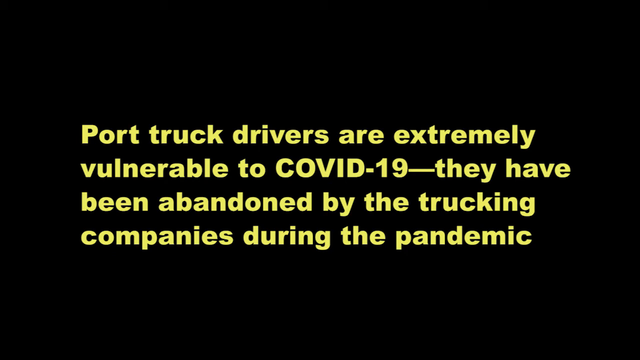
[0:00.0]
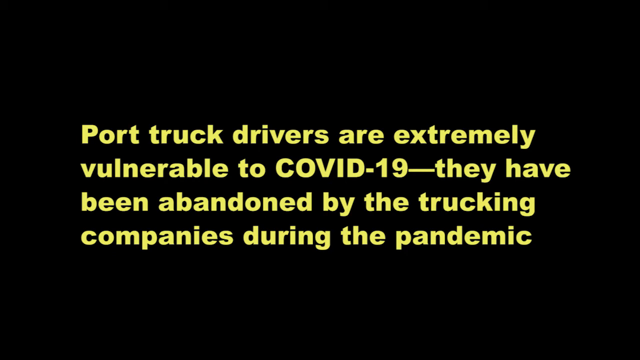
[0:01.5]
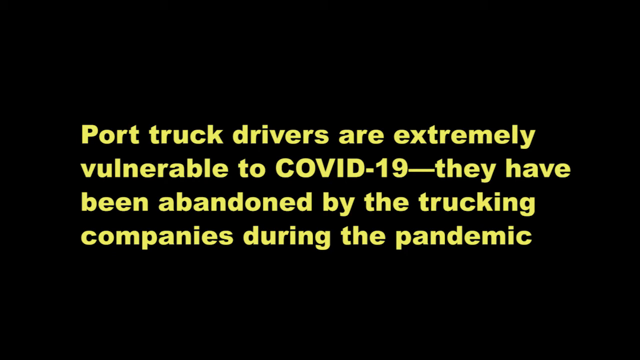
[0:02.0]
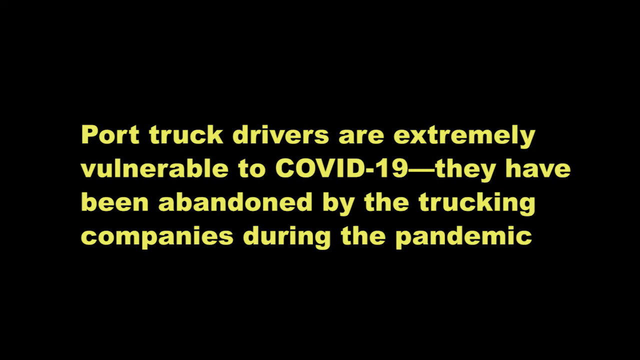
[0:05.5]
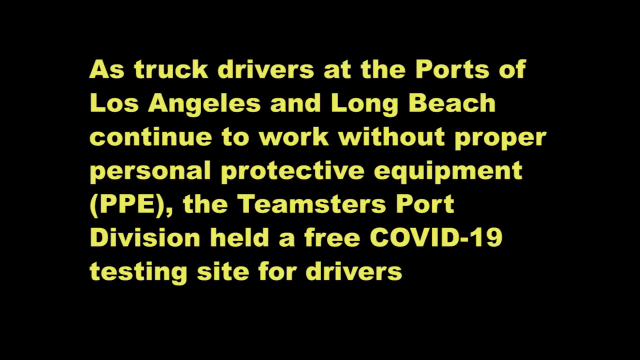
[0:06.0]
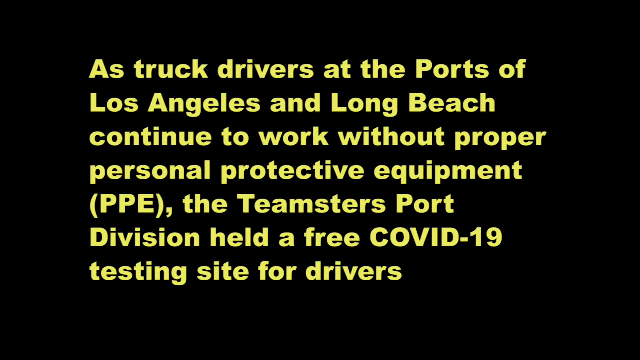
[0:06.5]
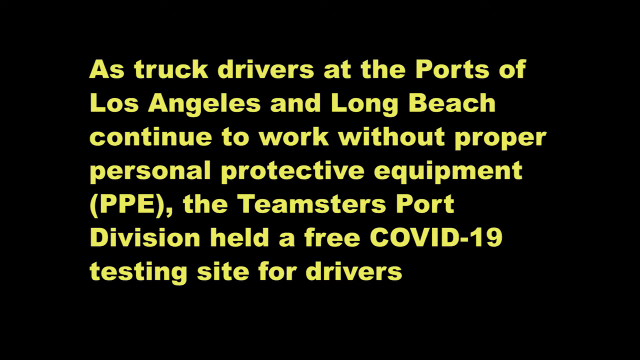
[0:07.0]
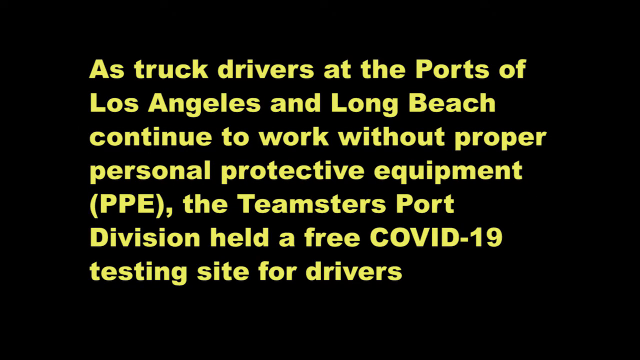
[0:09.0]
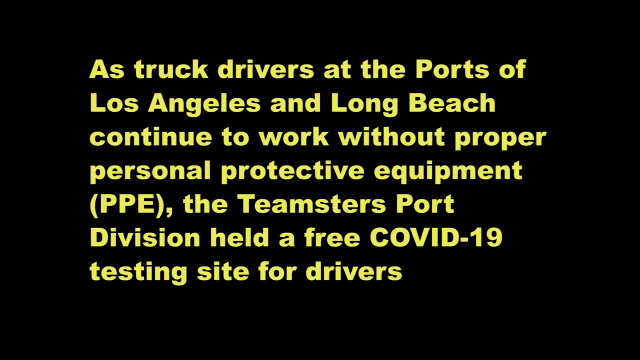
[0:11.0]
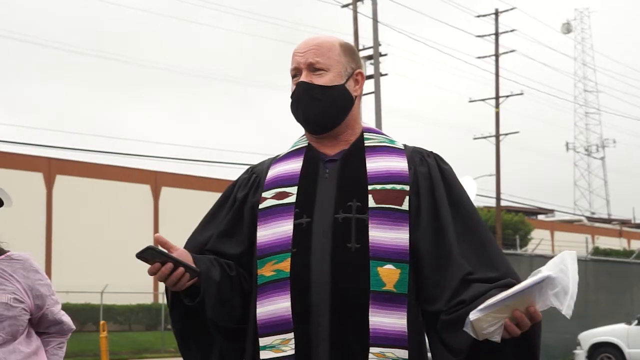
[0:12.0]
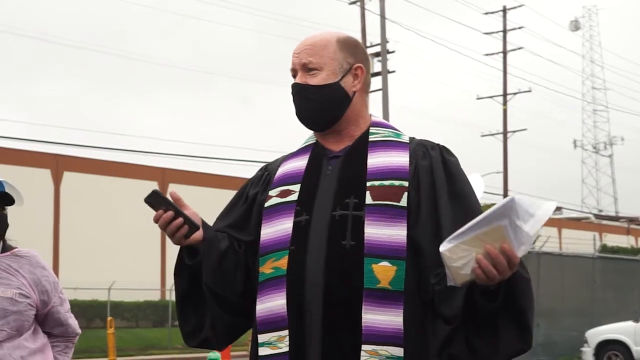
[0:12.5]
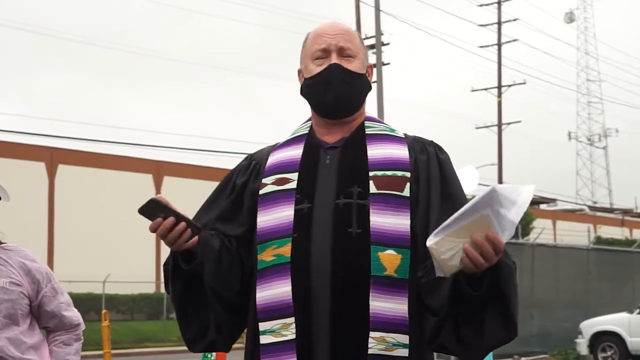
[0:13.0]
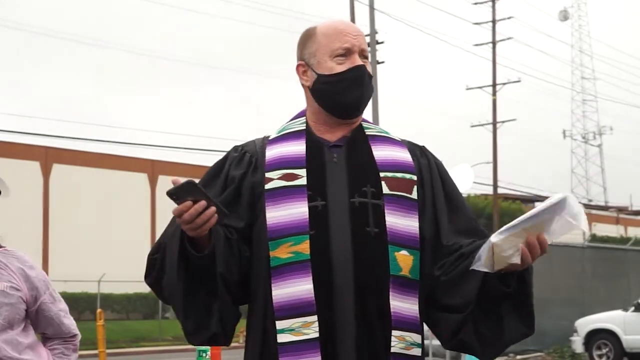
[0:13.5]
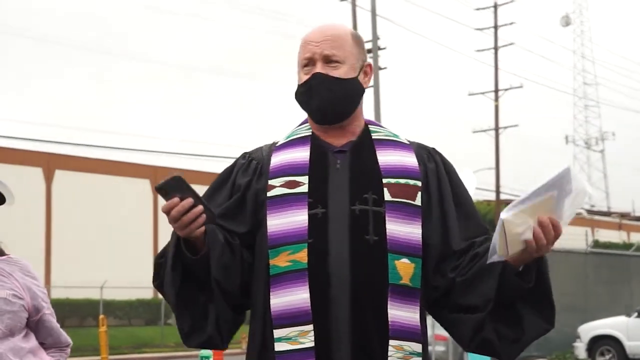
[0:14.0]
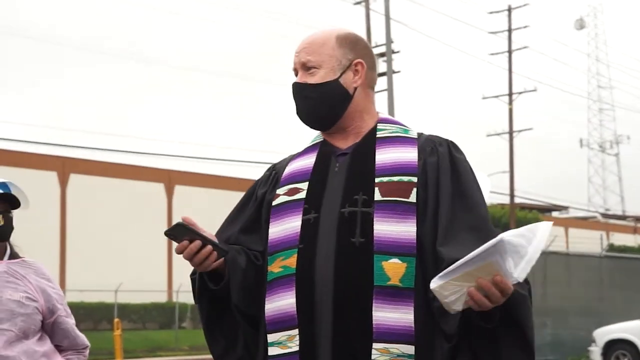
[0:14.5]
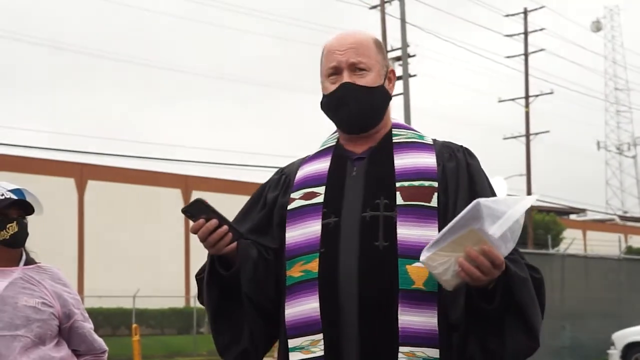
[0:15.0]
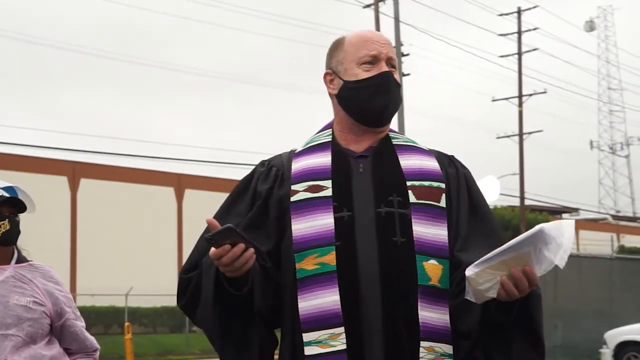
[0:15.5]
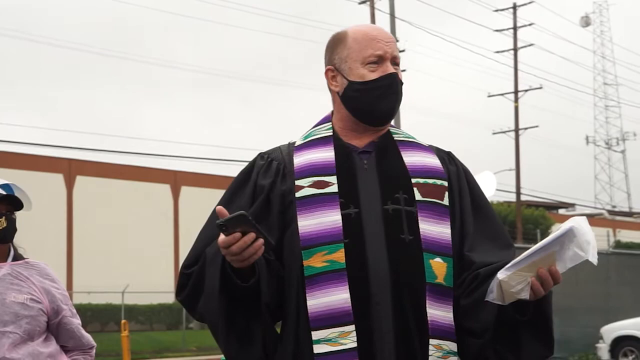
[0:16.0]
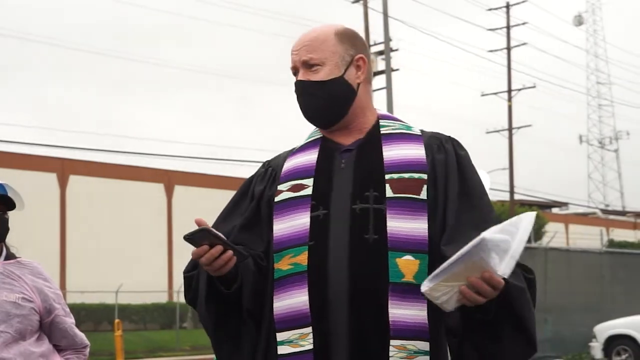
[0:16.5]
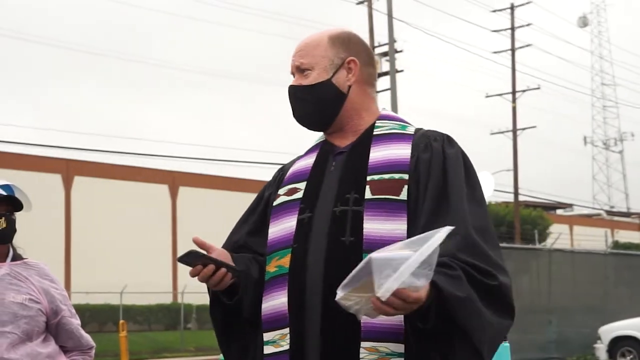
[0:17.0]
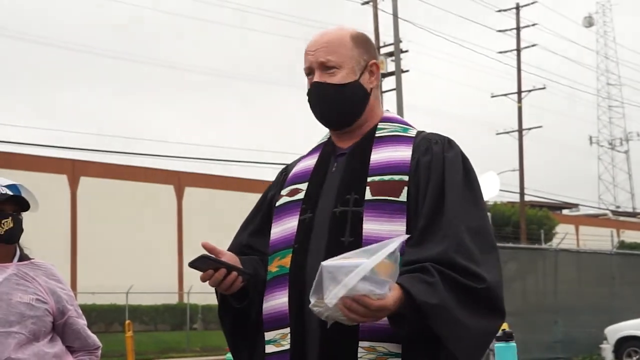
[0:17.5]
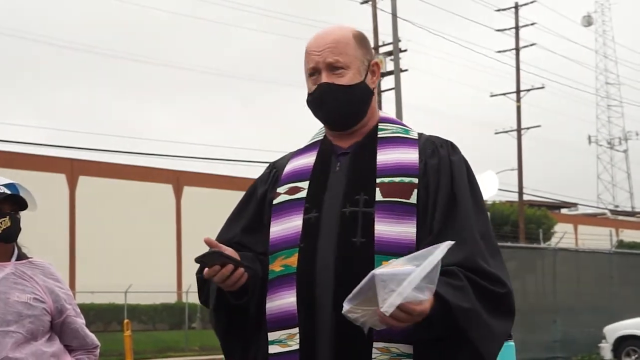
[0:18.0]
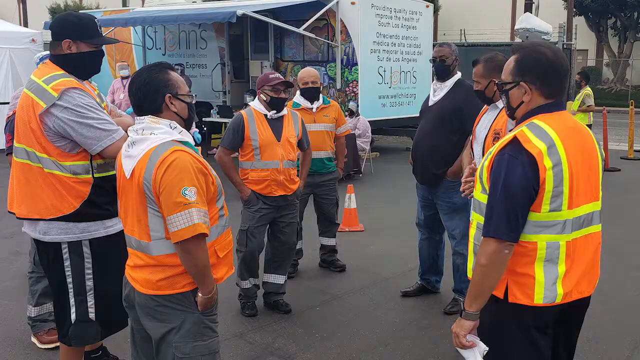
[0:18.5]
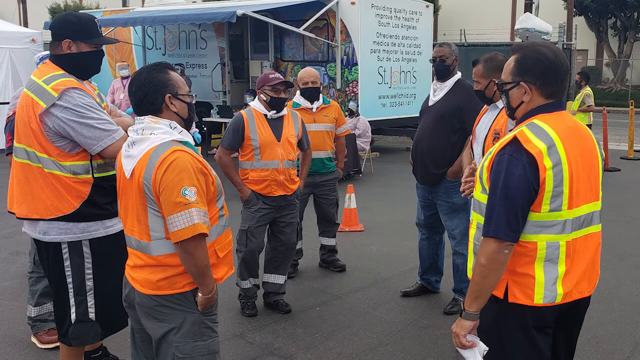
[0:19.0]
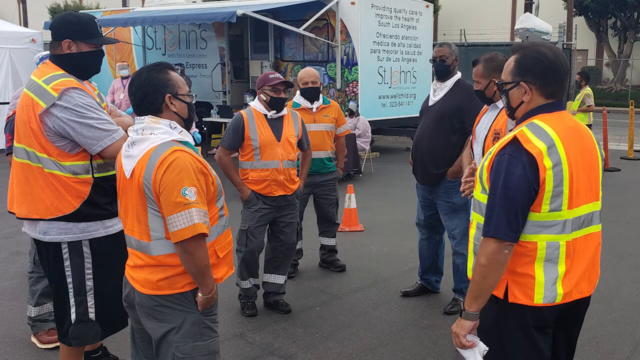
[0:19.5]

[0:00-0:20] The video begins with writing in yellow on a black background, and the ratings shown change to the next phase. A man is talking while holding a phone to his head and something else in his left hand; he wears a mask, blue clothing, and a scarf in different shades of purple. Electricity poles are behind. A team of men wears reflectors, some red, some yellow, and some yellow and green. They are on an open ground, discussing something, and one of them wears no uniform, just regular clothes. Another person is fully covered.